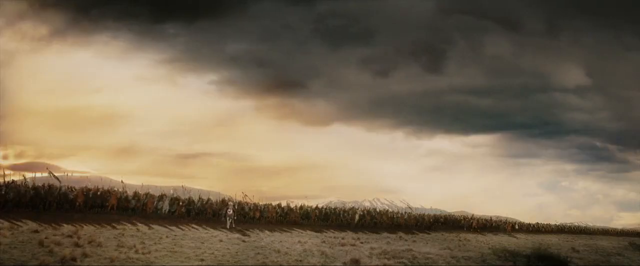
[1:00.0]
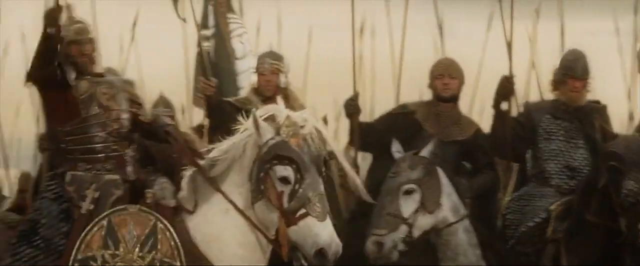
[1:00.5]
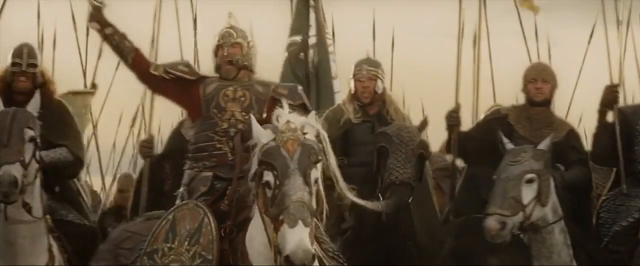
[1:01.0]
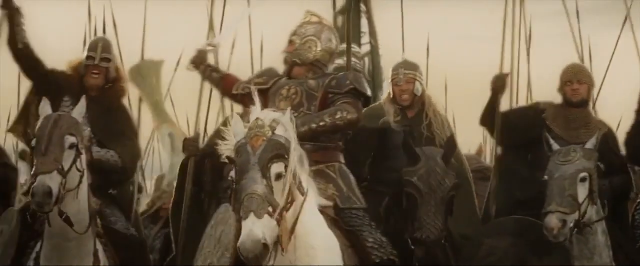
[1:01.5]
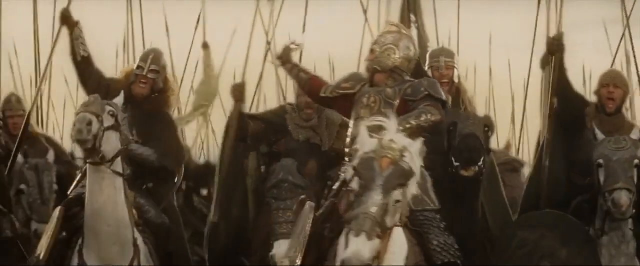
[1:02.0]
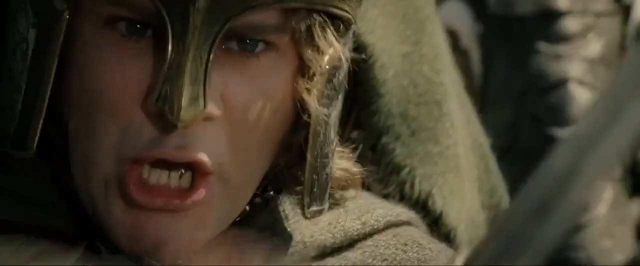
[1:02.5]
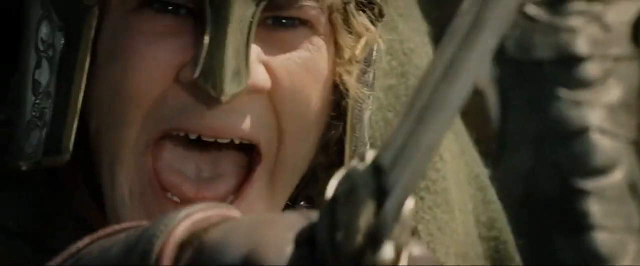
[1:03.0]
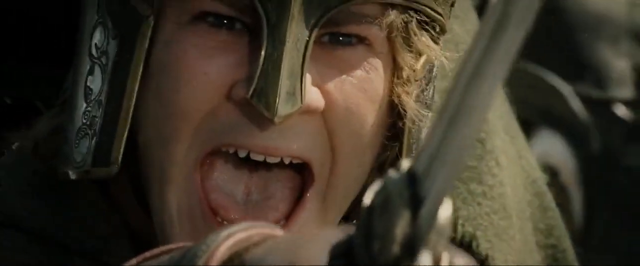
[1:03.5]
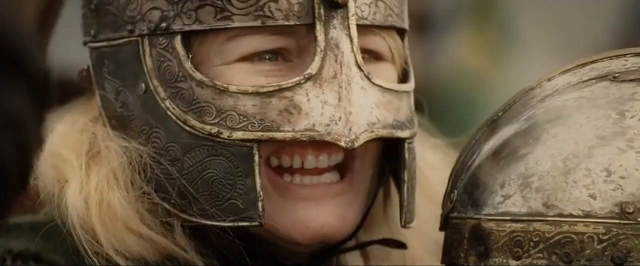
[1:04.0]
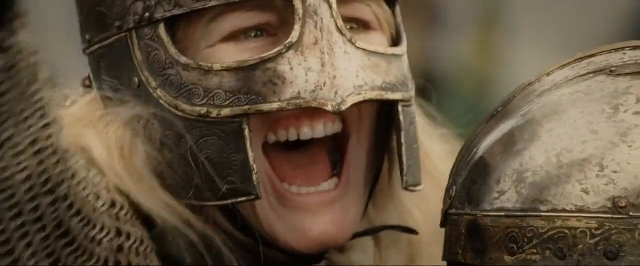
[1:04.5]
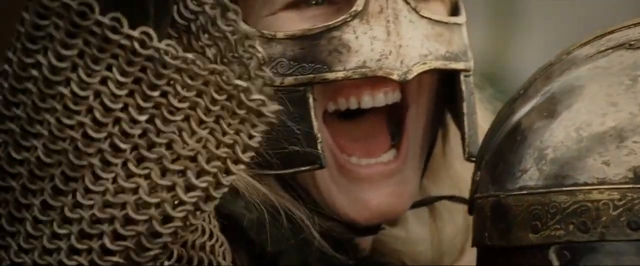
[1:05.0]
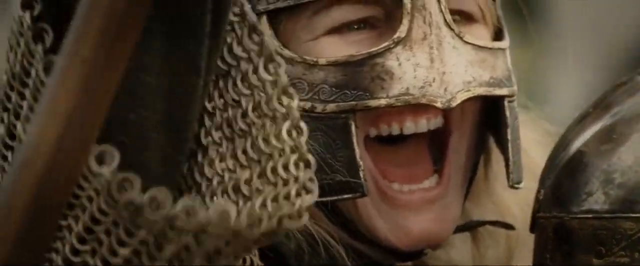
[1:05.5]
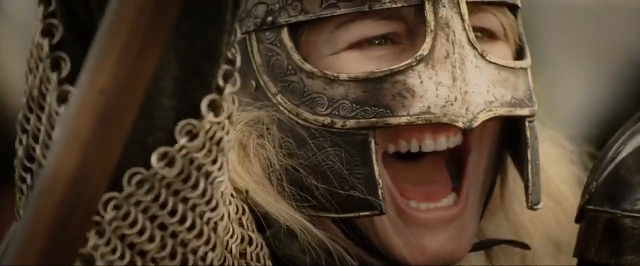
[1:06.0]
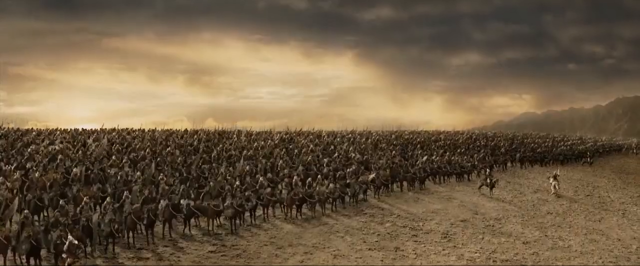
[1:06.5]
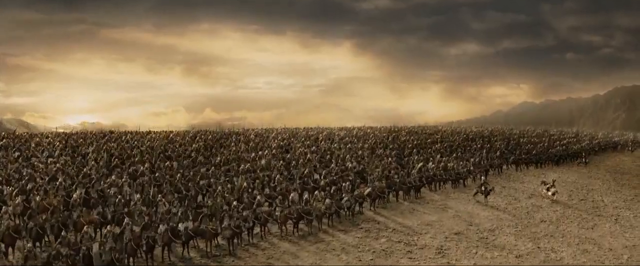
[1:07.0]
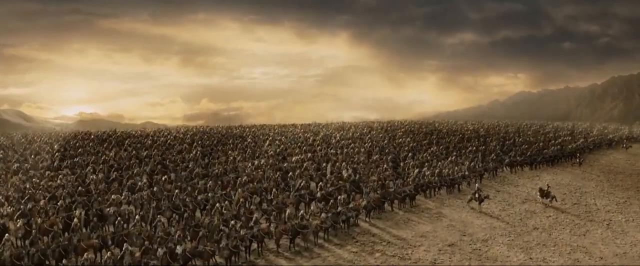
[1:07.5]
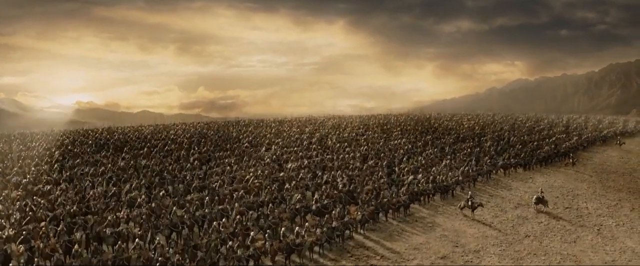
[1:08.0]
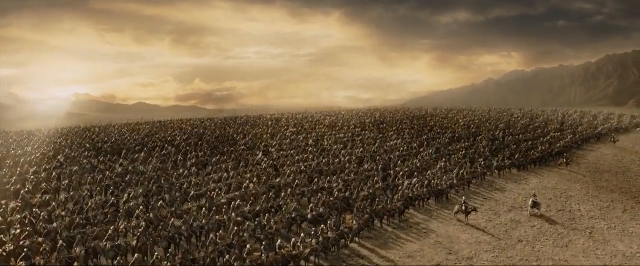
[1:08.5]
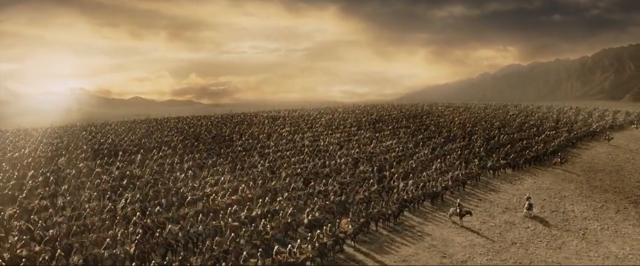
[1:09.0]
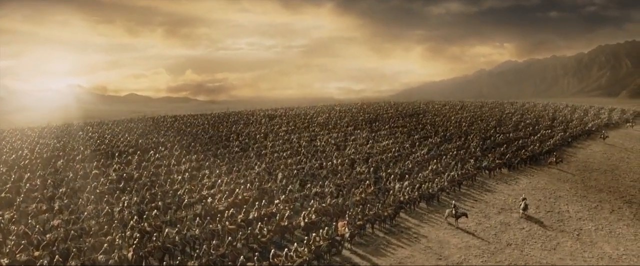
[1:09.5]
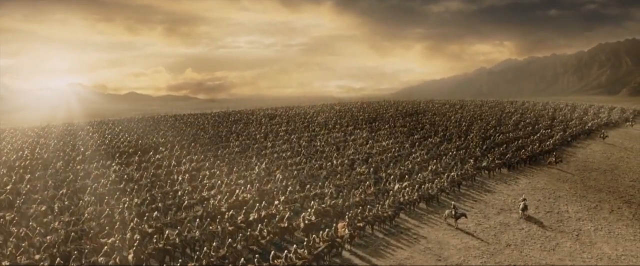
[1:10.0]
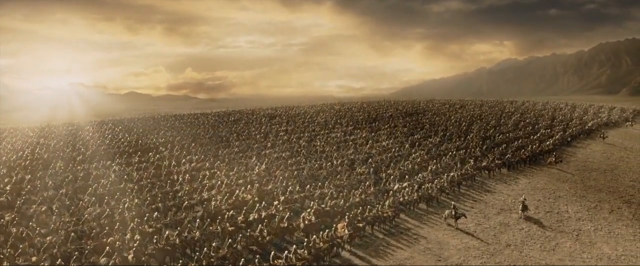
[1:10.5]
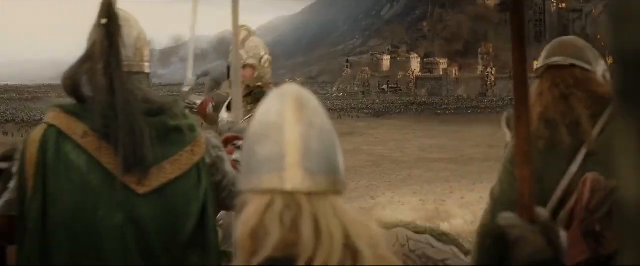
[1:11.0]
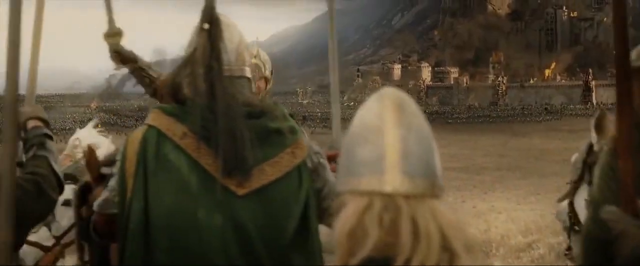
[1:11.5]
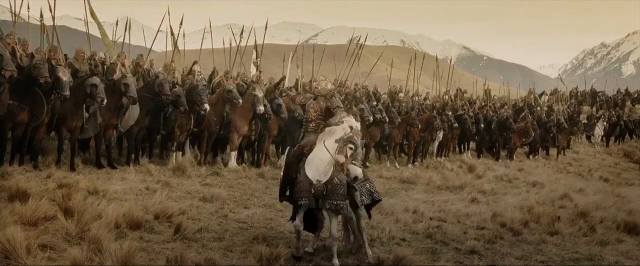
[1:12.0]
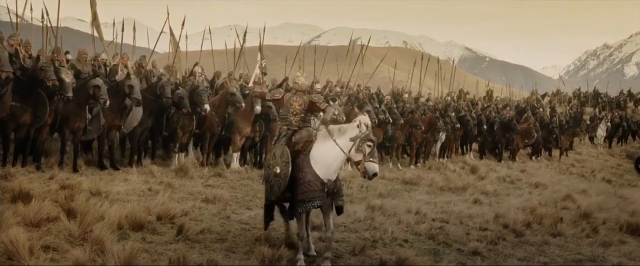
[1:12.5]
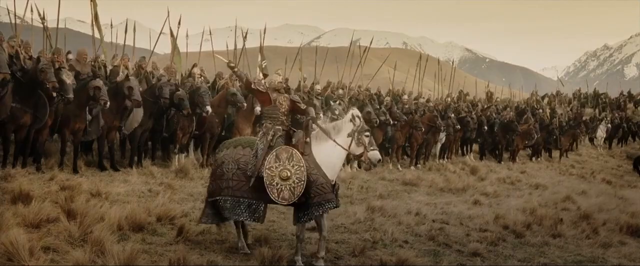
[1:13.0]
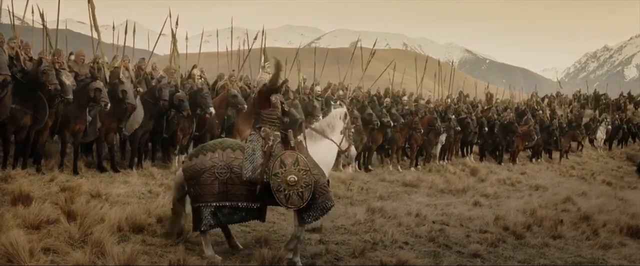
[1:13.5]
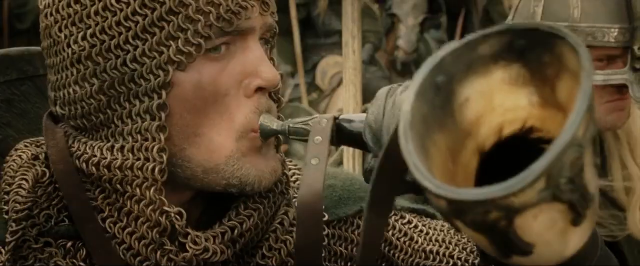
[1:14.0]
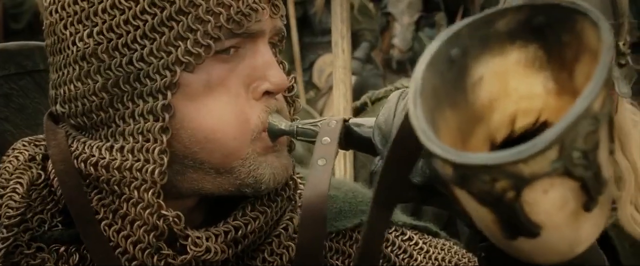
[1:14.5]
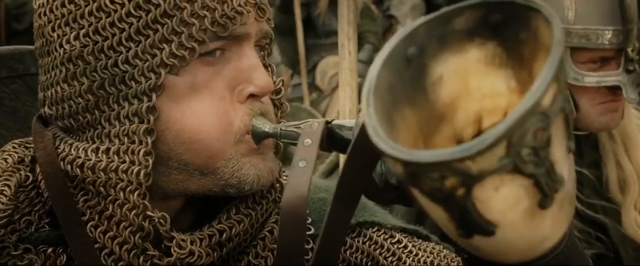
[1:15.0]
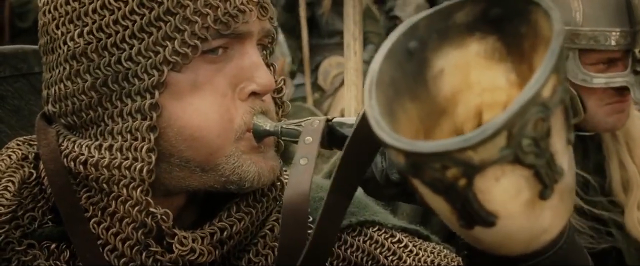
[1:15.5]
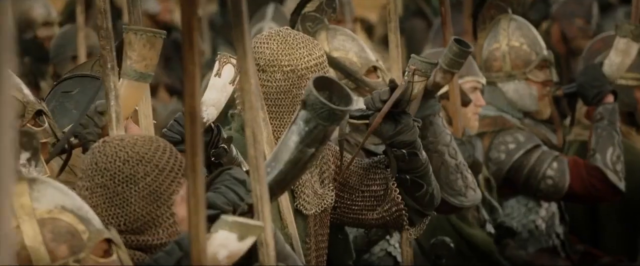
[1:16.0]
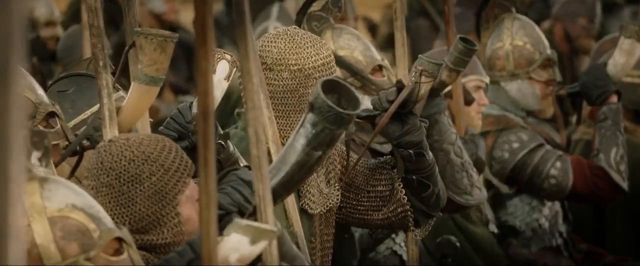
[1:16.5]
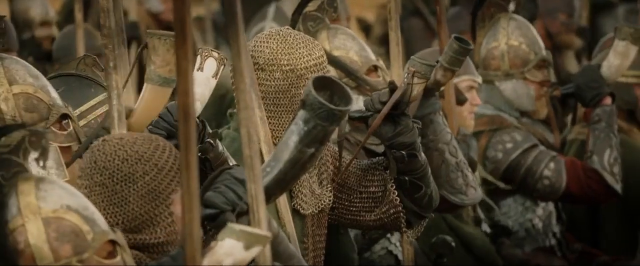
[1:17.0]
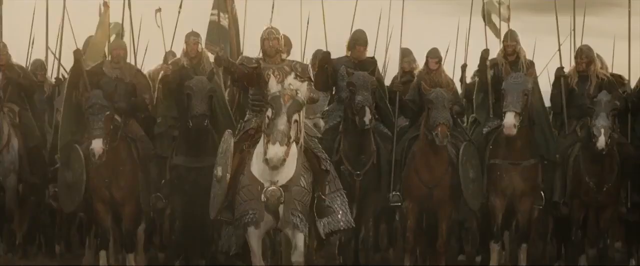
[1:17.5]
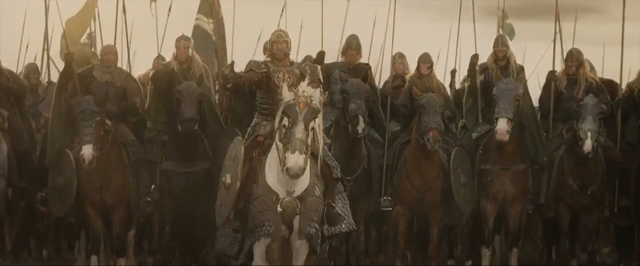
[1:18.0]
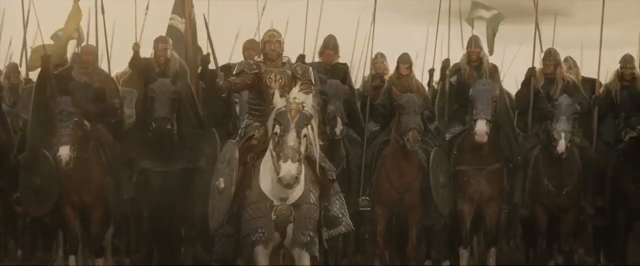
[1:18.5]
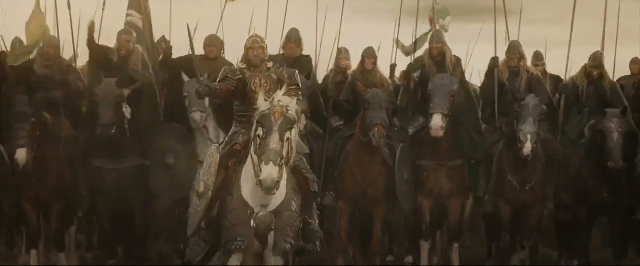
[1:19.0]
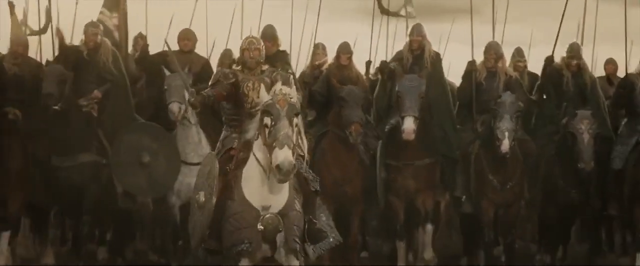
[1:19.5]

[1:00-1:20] The footage appears to be from a Lord of the Rings film. It opens with a very wide shot of the army under a very dark and cloudy sky. It abruptly cuts to a close front shot panning from right to left across the army and the man on the white horse, who raises his sword and shouts at his army. It cuts to the small man on the woman's horse shouting and raising his sword, then to the woman, also shouting and raising her arm. A very wide shot of the army pans upward. It cuts back to a view from behind the army, focused on the man on the white horse talking to his army; he turns to face forward, shouting at his army. Someone else in chain mail blows a horn, followed by many other men in armor and chain mail also blowing horns. Finally the man on the white horse slowly trots forward.